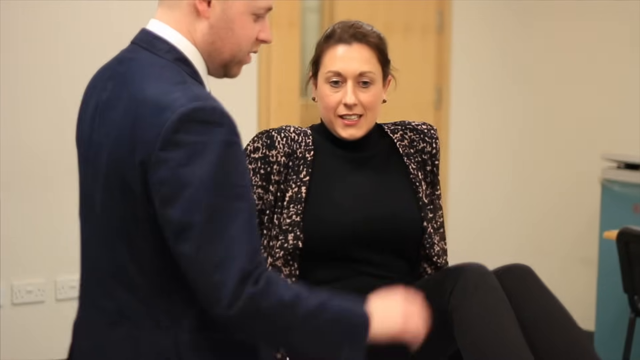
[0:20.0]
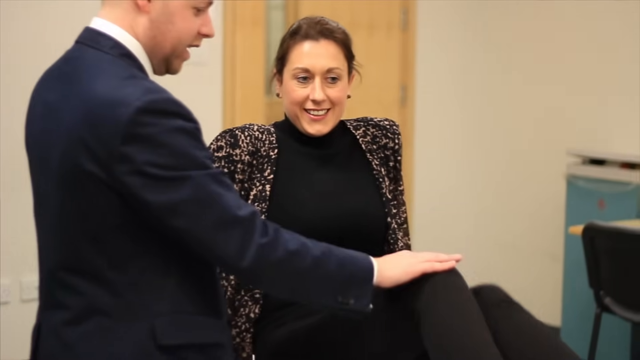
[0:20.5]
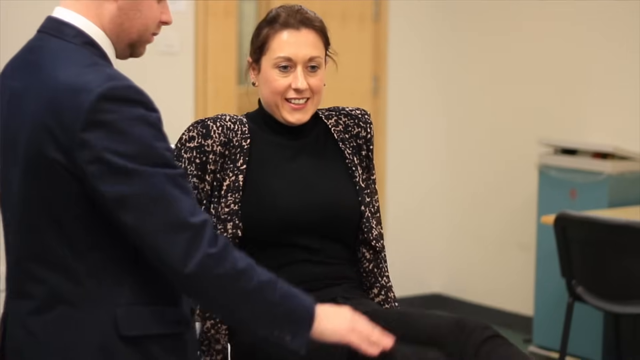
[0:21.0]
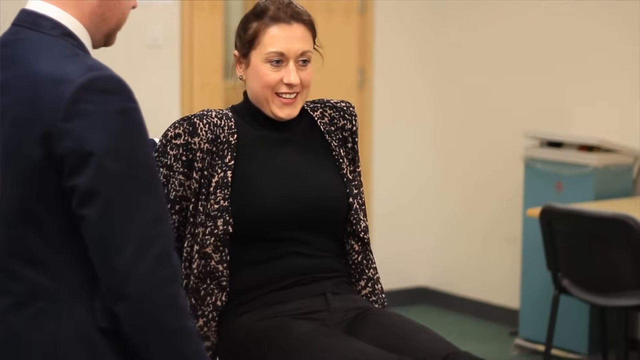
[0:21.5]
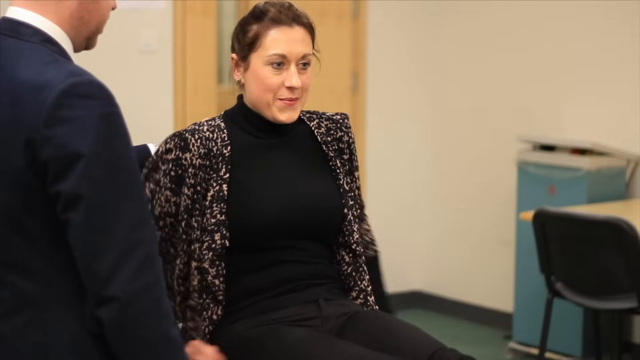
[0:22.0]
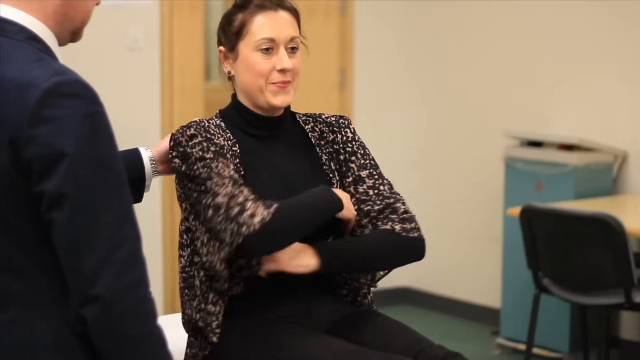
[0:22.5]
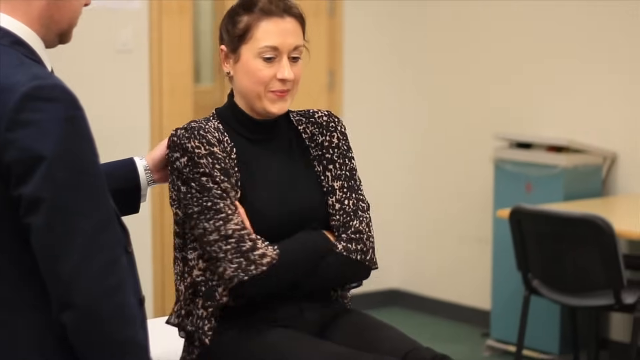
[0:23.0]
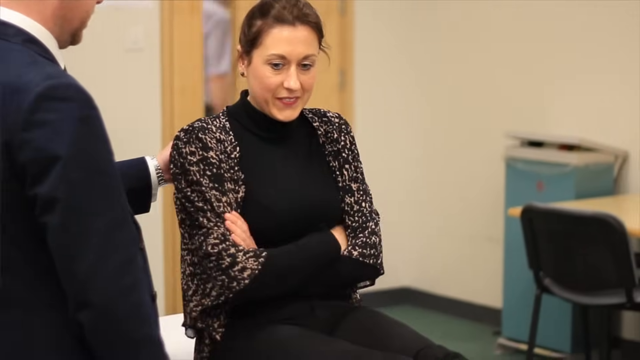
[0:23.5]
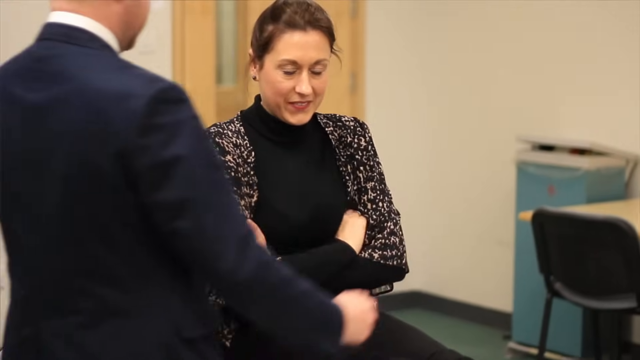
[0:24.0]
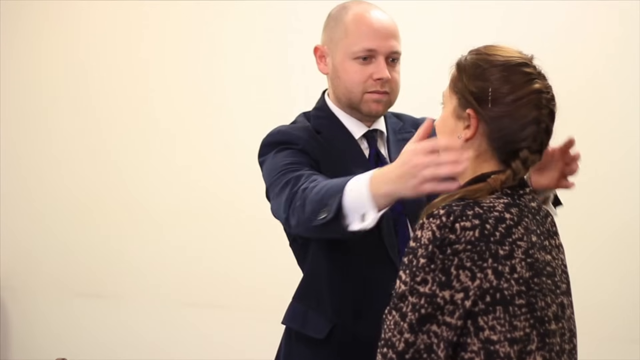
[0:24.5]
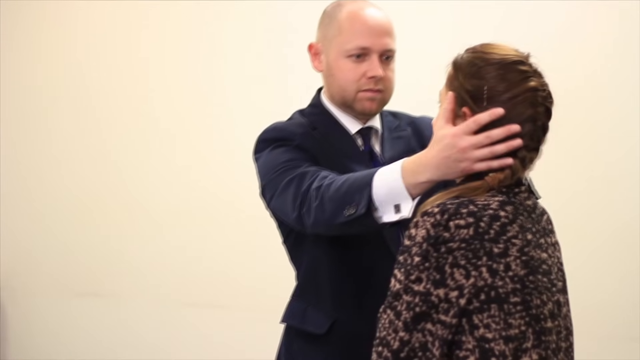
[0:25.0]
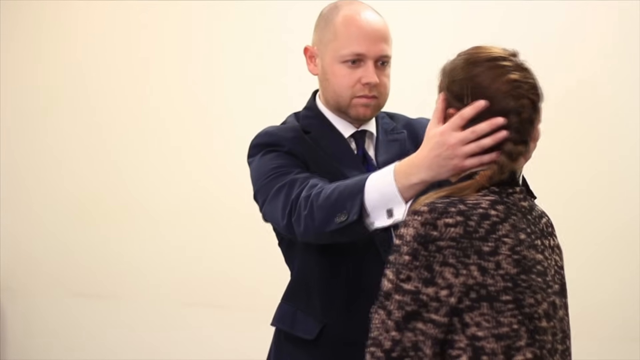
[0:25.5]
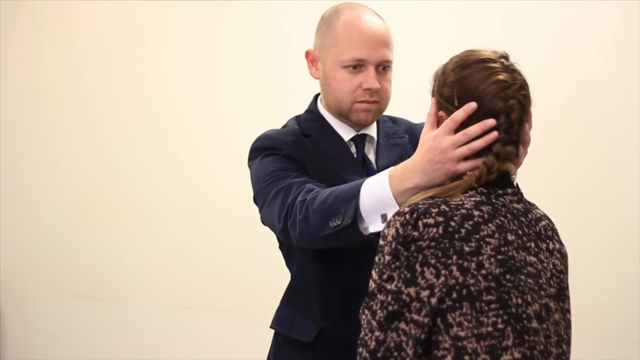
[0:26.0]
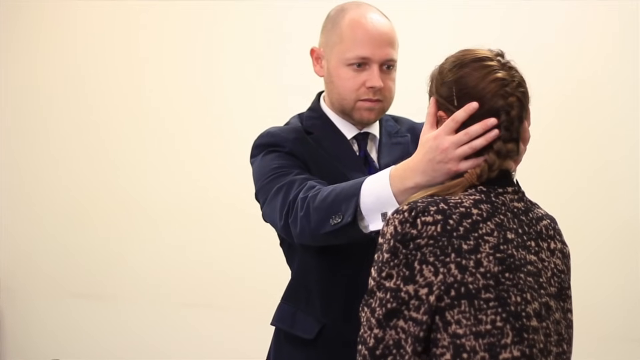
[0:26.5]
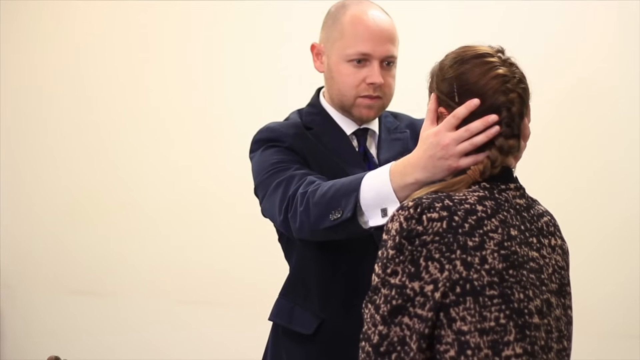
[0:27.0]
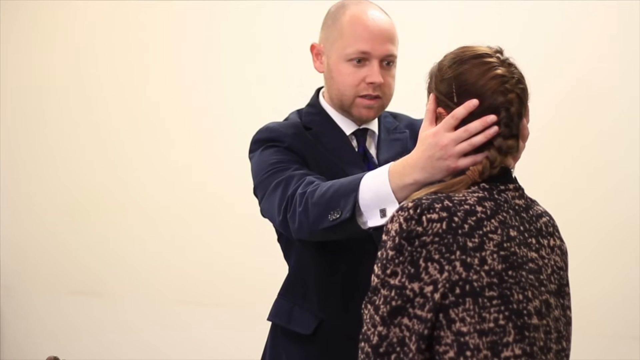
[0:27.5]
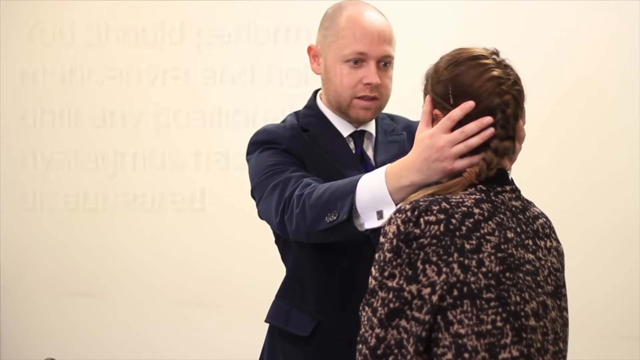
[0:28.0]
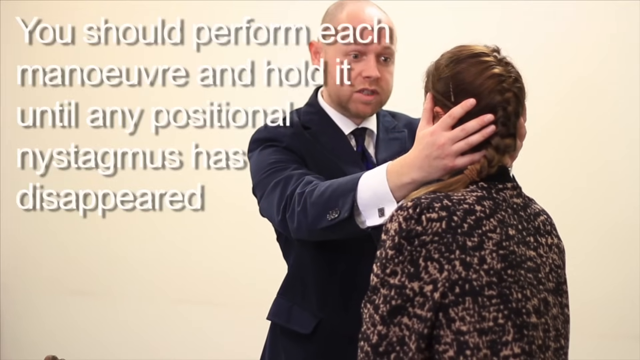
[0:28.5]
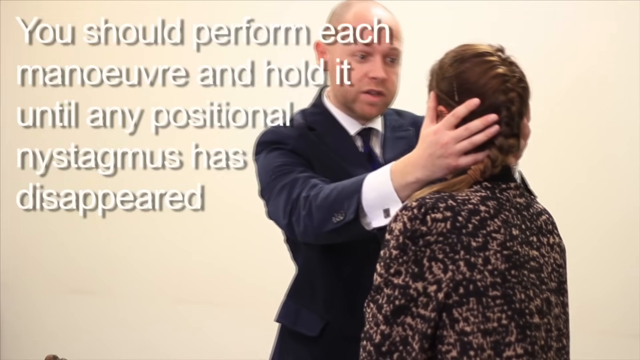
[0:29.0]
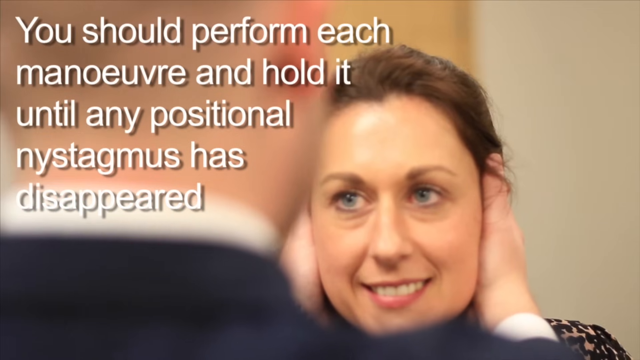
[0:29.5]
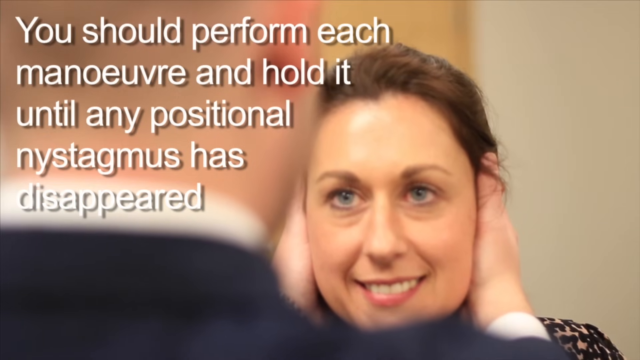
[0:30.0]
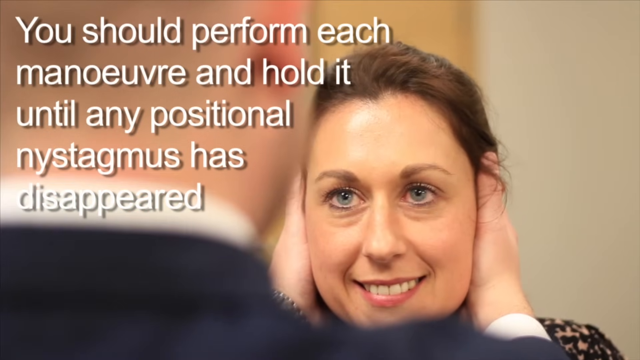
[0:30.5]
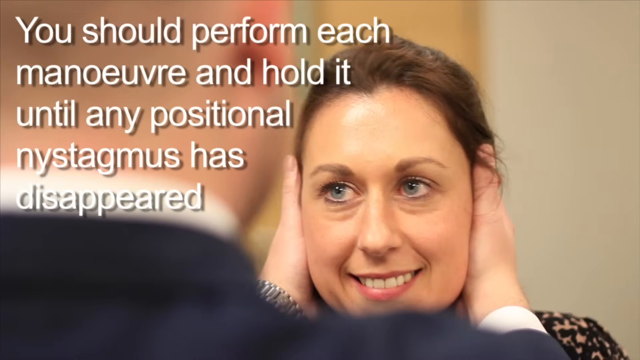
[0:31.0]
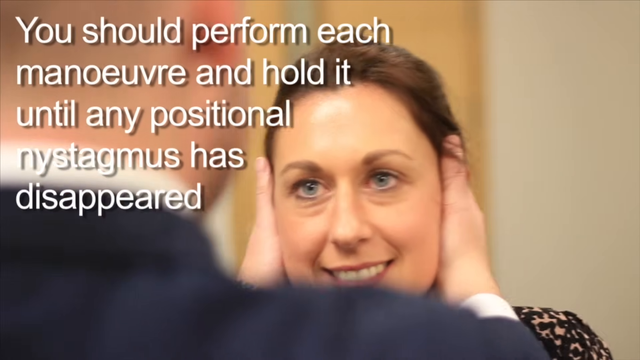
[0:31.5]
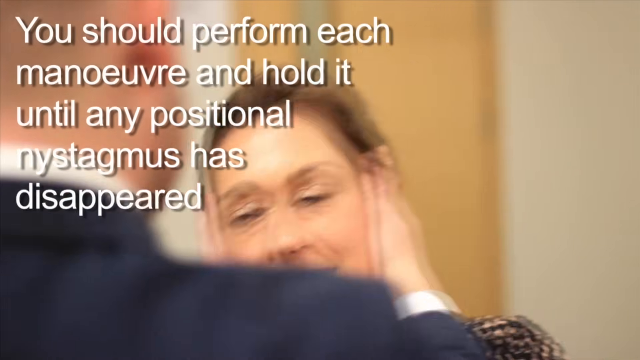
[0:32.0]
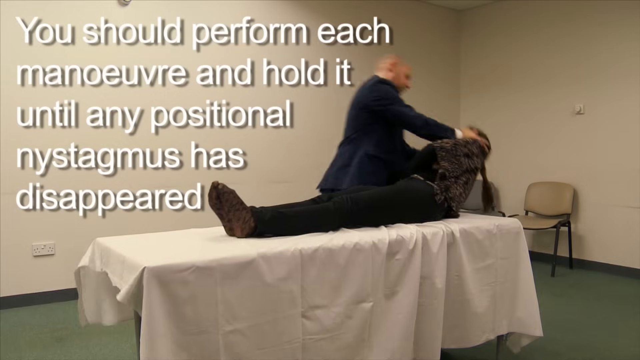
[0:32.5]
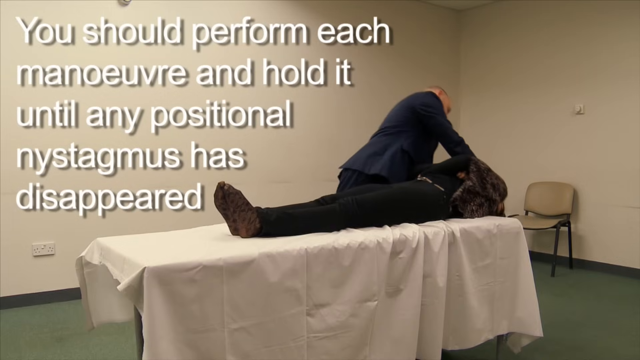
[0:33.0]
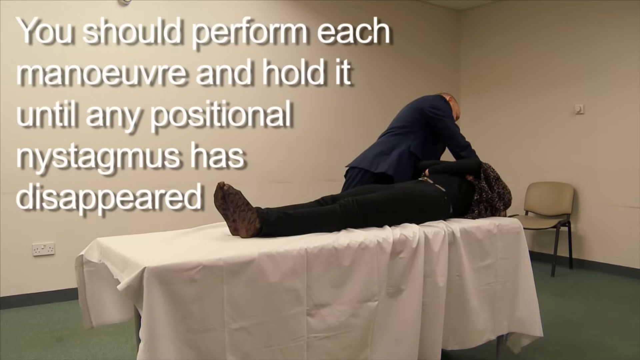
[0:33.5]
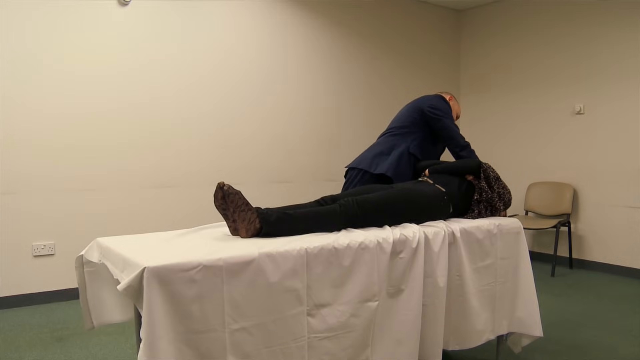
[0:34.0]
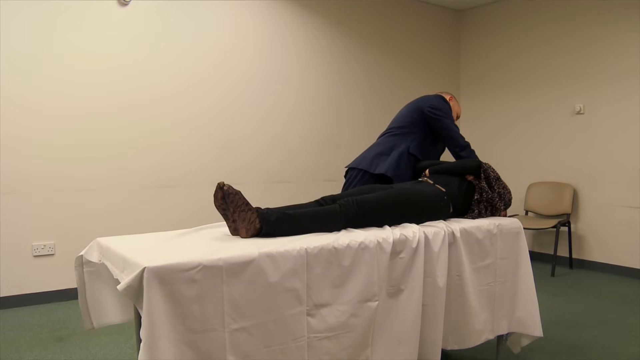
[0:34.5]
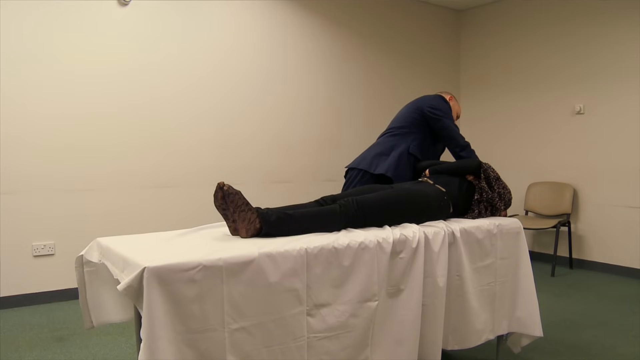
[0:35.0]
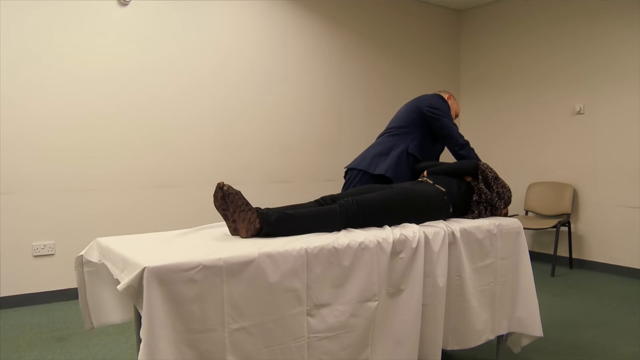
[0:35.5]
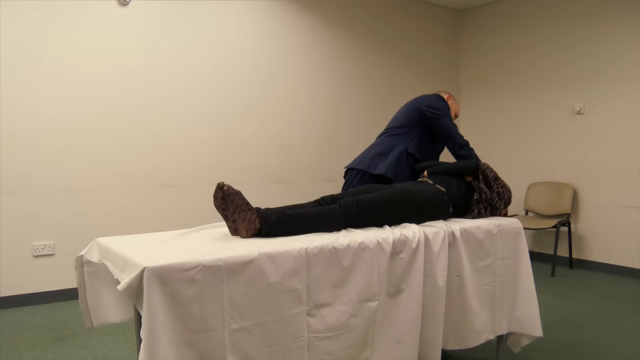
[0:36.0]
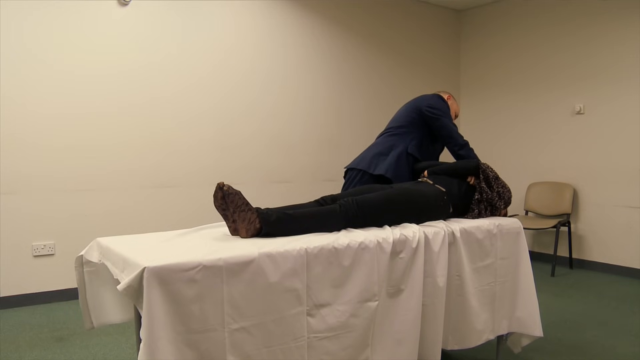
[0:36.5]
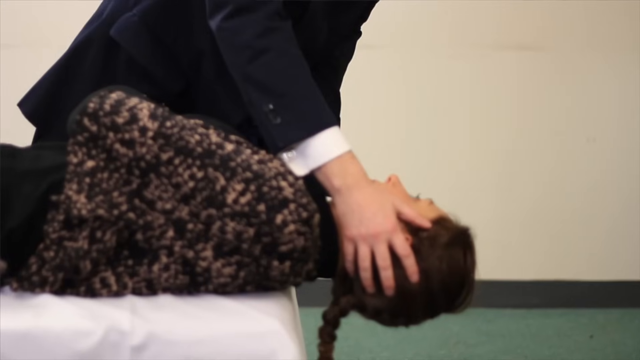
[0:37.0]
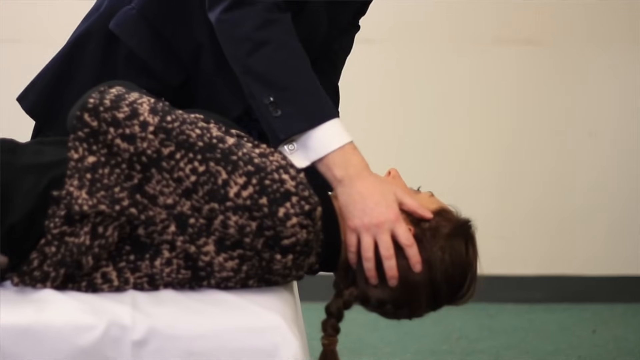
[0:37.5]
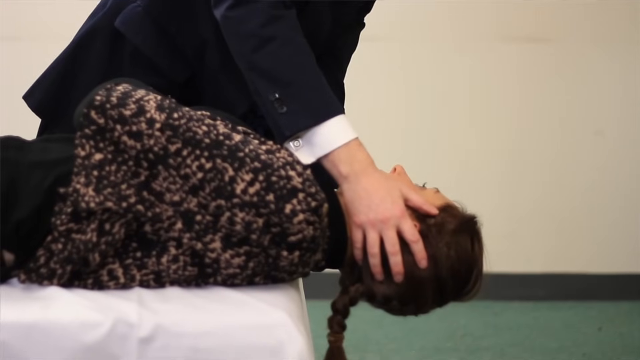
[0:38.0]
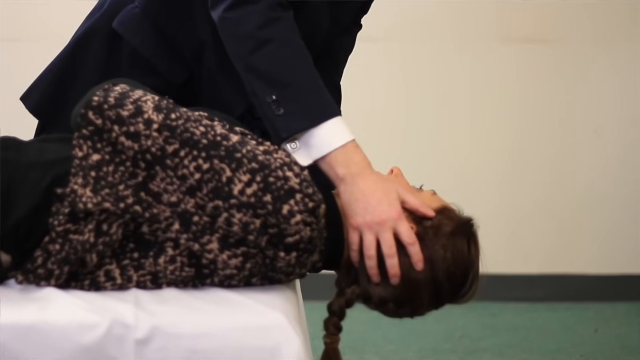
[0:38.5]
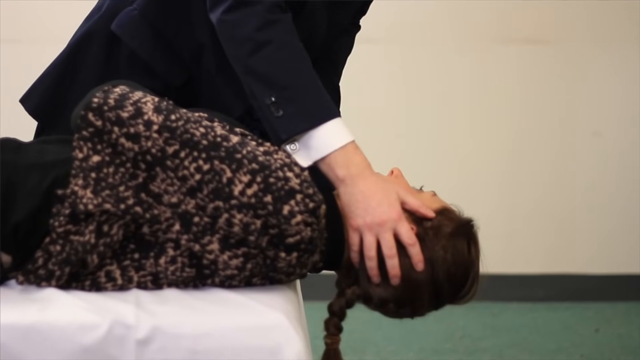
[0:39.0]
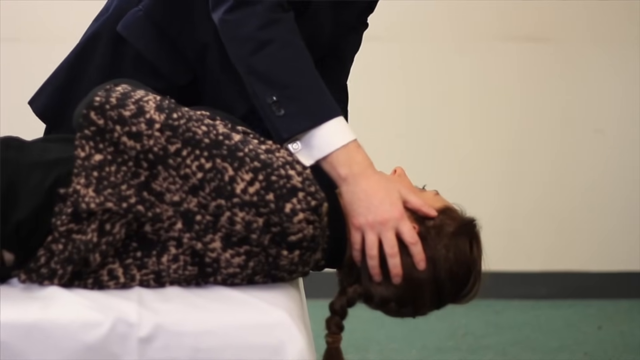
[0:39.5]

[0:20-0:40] A man in a blue suit, who looks like the doctor, is with a woman in front of him who might be acting as the patient. She wears a multicolored sweater and is otherwise dressed all in black, with her arms crossed over her chest. The doctor, who has a bald head and wears a white shirt with cufflinks, examines her against a background lighter than beige. The woman's hair is in a French braid. With both of his hands on her head, he moves her head so it faces him directly. Text reads "you should perform each maneuver and hold it until any positional". He is talking. Her face is then shown; he appears to look directly into her eyes, and she smiles. She has blue eyes. They are on a table.